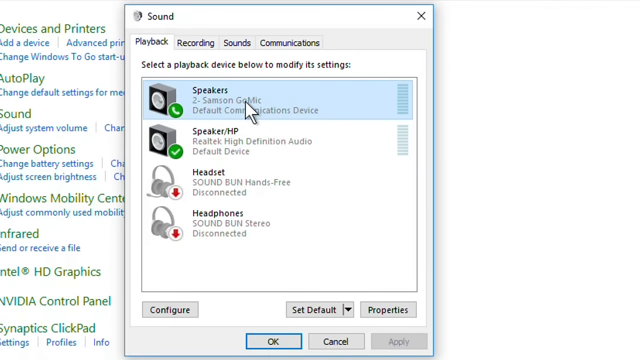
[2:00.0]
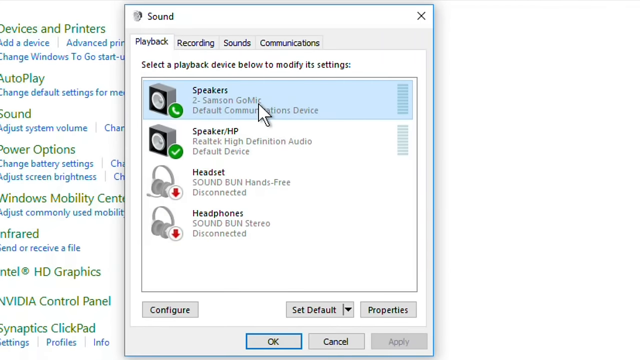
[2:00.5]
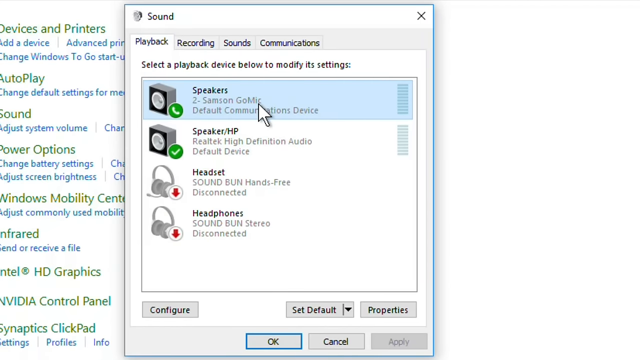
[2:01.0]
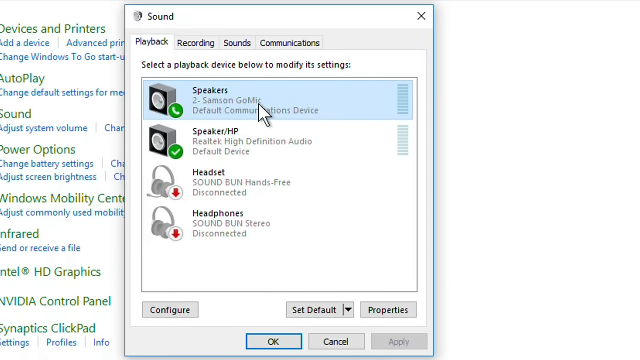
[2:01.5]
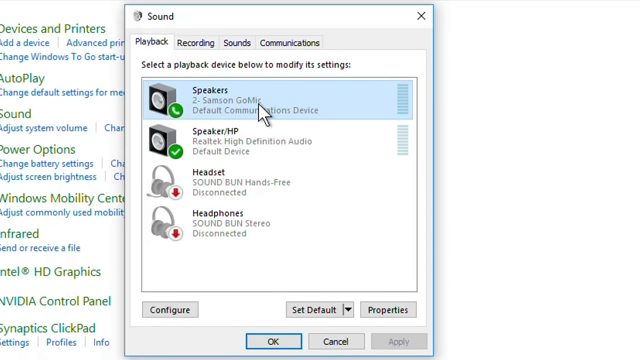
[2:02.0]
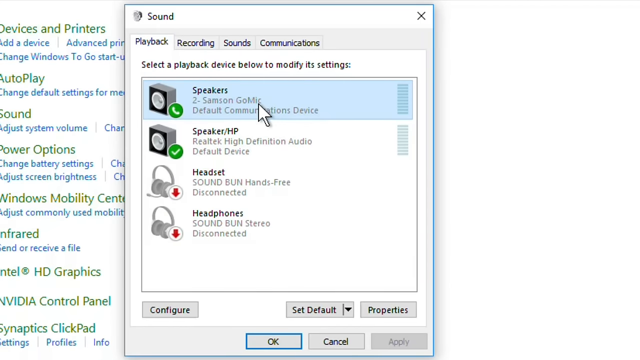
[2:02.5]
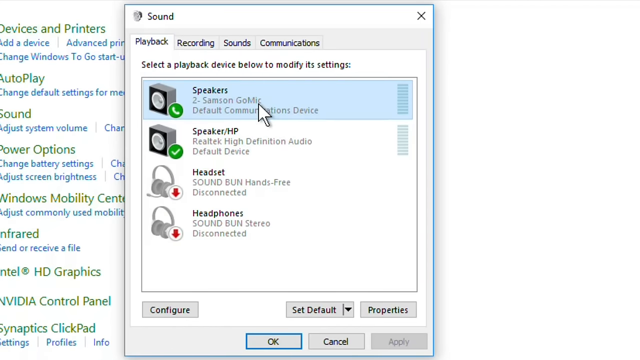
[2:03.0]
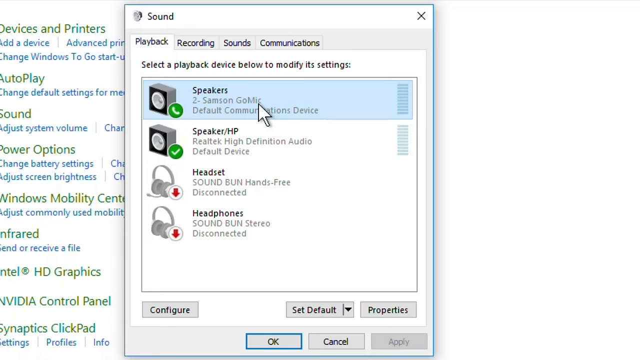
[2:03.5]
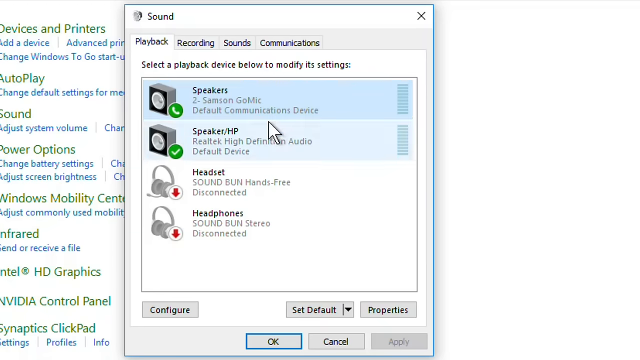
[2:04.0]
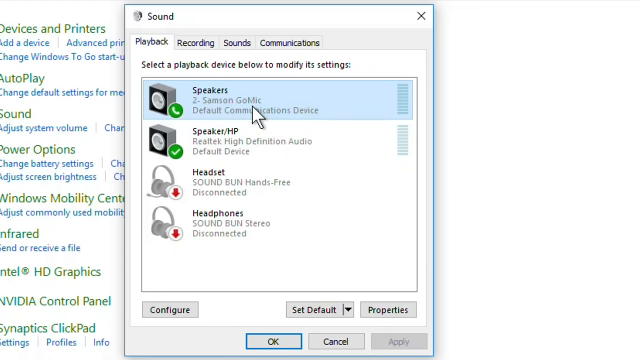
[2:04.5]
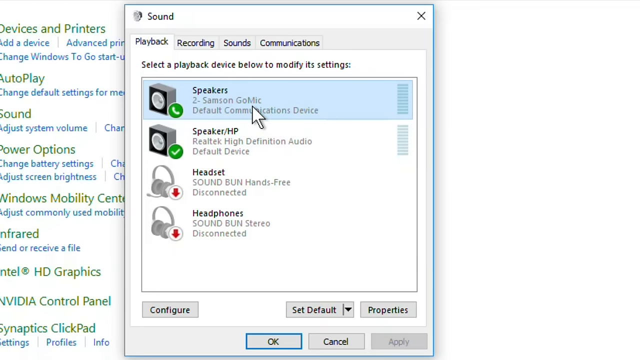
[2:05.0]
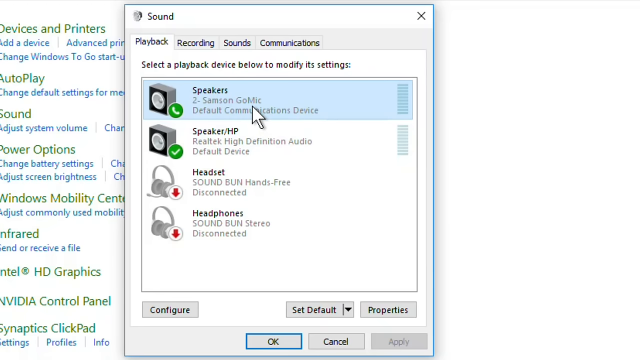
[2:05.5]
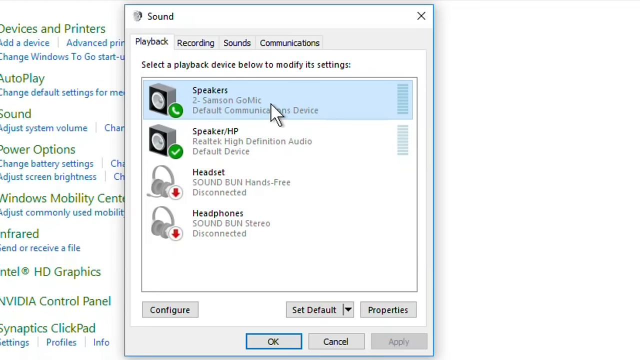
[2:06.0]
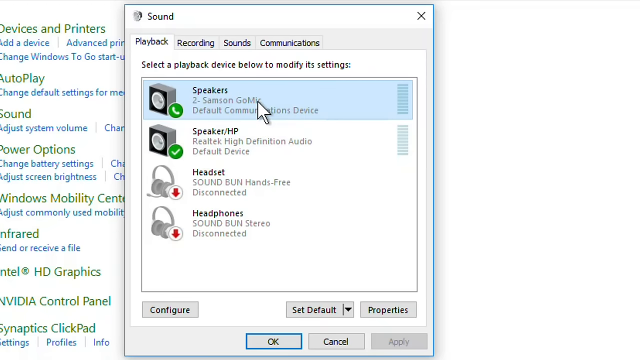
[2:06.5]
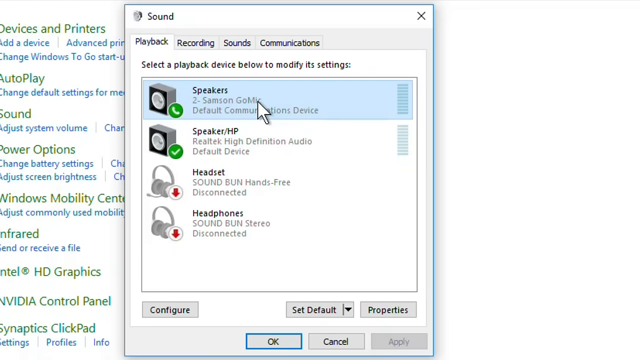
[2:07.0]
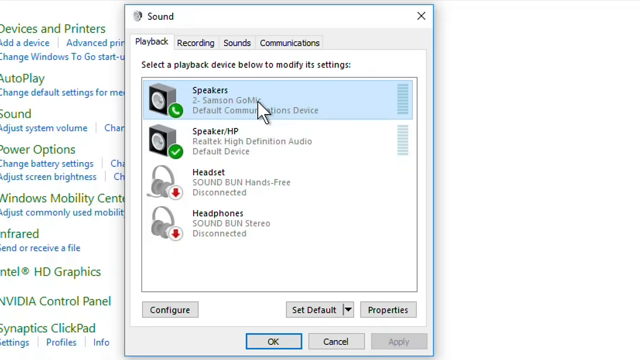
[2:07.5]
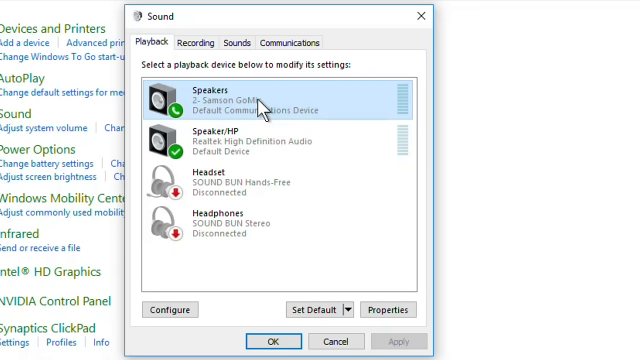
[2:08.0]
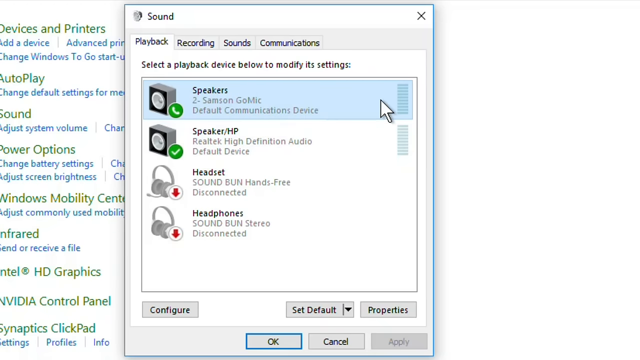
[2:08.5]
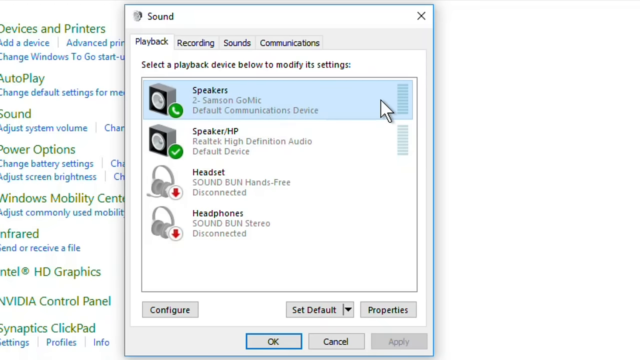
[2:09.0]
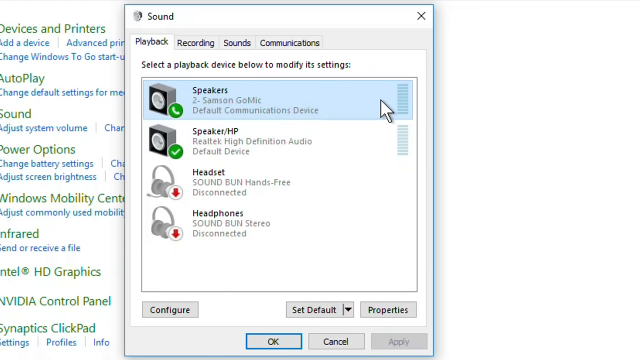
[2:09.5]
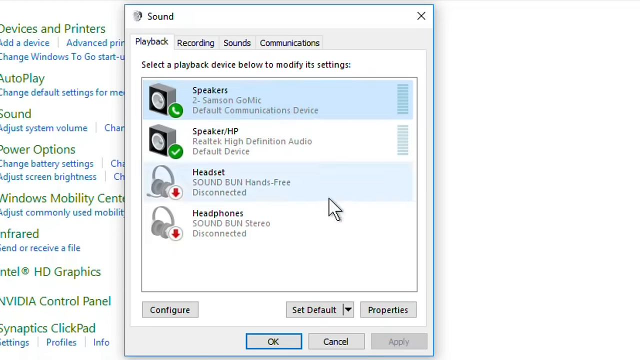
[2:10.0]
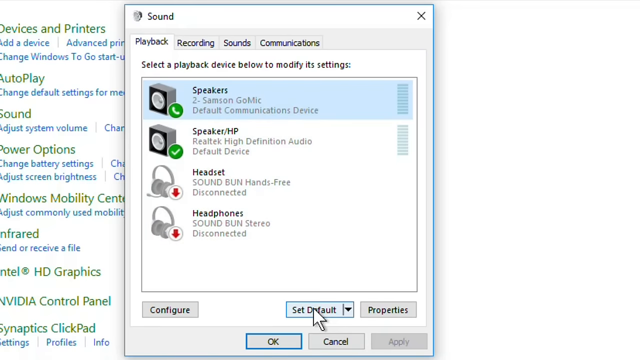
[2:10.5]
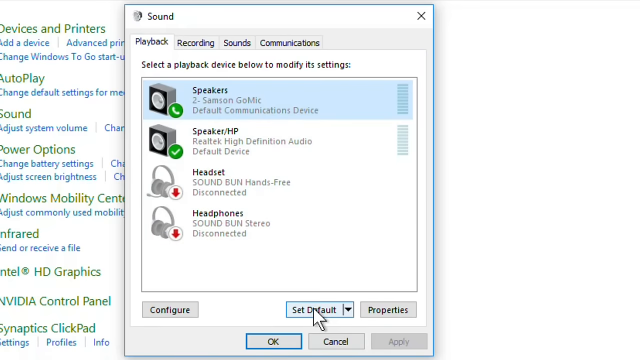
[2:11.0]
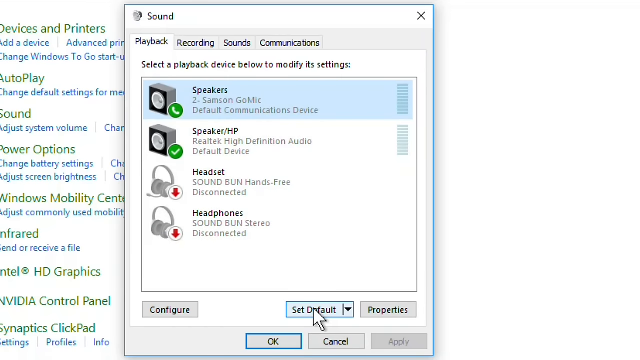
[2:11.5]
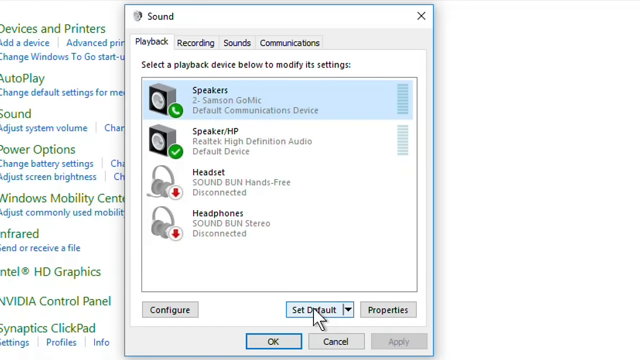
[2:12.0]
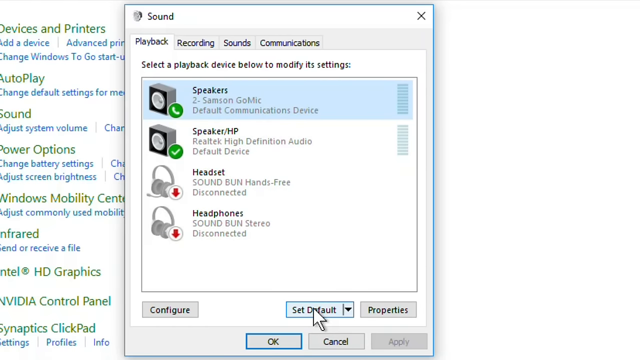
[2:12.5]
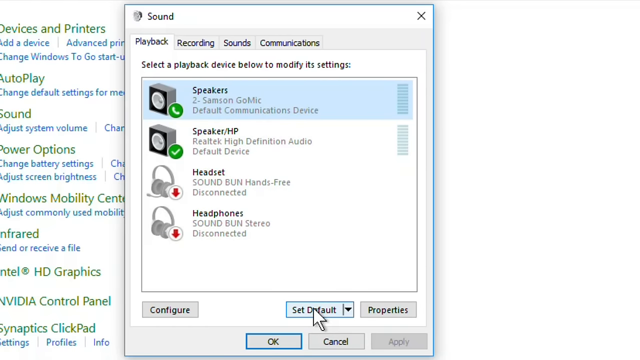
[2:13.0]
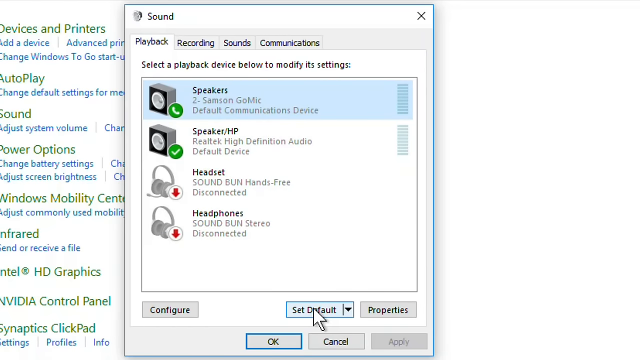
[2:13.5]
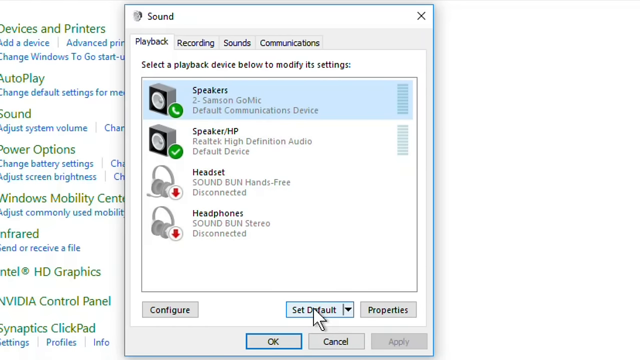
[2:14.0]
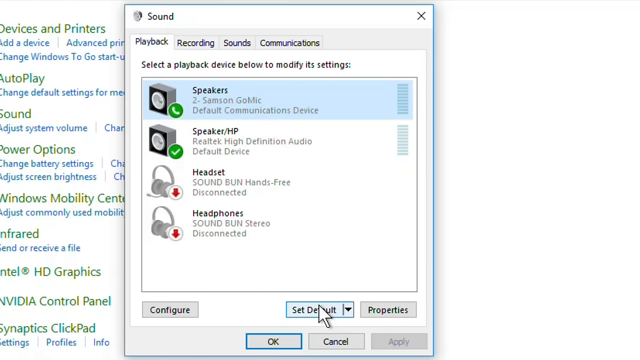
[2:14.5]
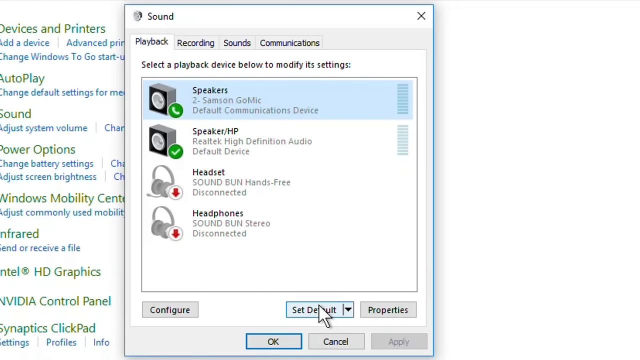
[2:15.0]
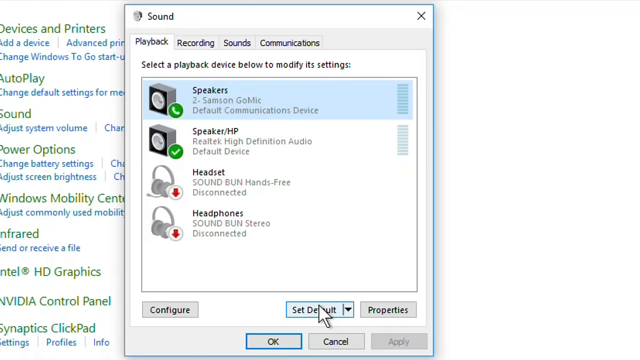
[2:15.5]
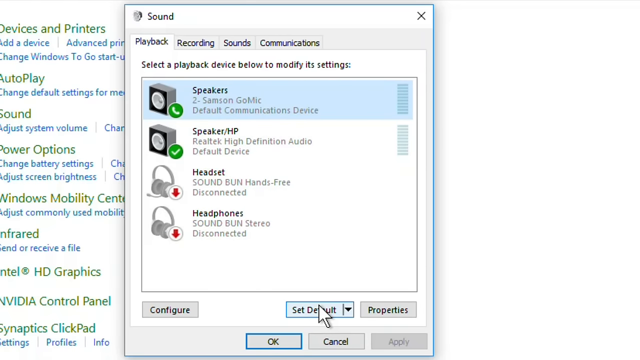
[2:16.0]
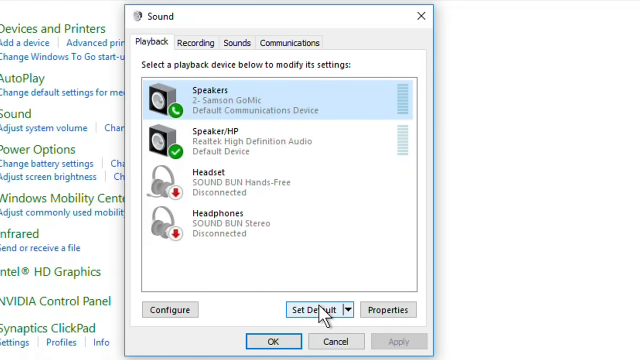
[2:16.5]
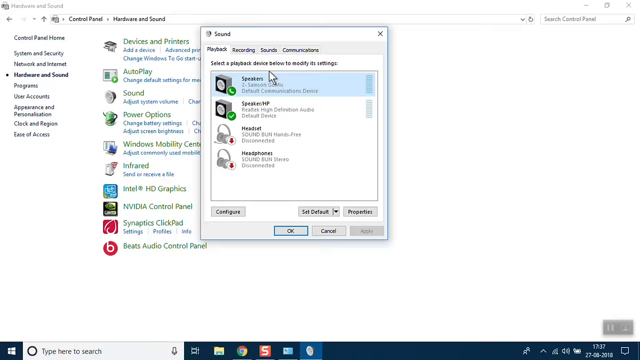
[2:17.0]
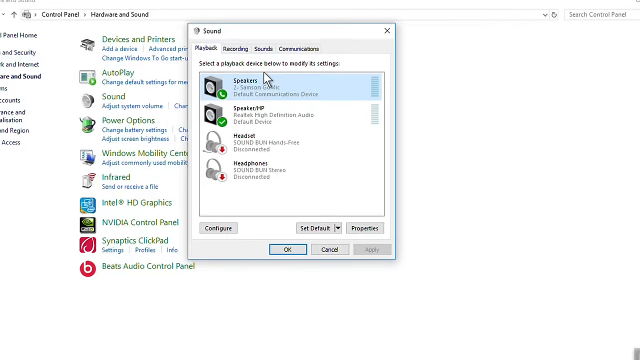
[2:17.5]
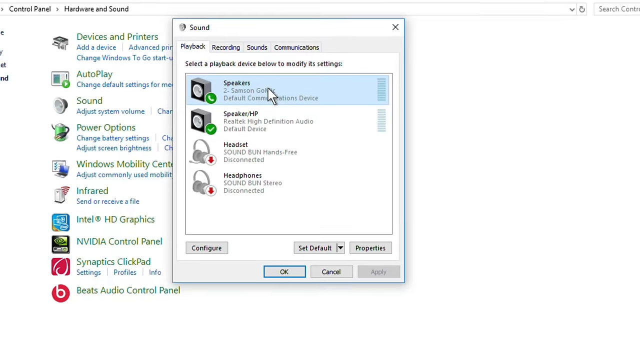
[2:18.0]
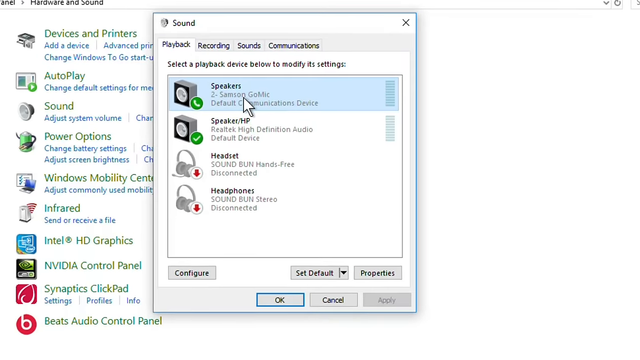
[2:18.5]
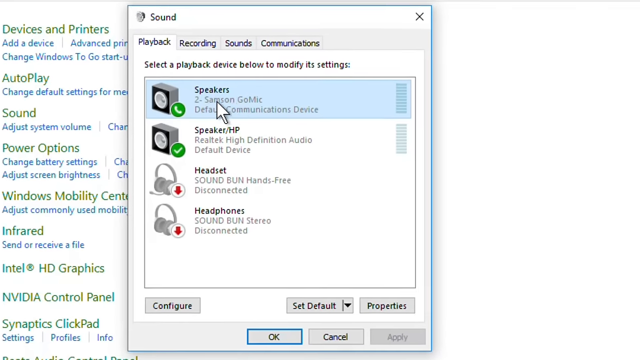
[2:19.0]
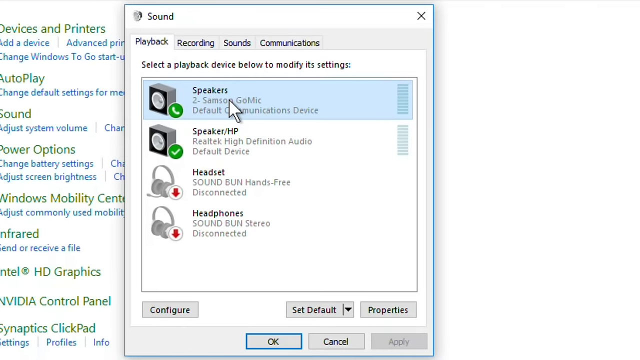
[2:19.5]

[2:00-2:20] The cursor is still hovering over Speakers without having clicked it, and the entry has a light blue background. Below the word Speakers it says "2-Samson GoMic", apparently the type of speakers. The cursor is now an arrow rather than a hand, moving in an oval shape within that field. It then moves to a field lower and to the right, still within the Sound window, that says "Set default", with a downward arrow to its right, and hangs over it as though it is going to click. Perhaps it clicks, because the view jumps out to the same image from further away and then slowly zooms in. The cursor hangs over Speakers, which has a light blue background as before, so it is not clear whether "Set default" was clicked. The text describes the 2-Samson GoMic speakers as the "Default communication device", as it did earlier.